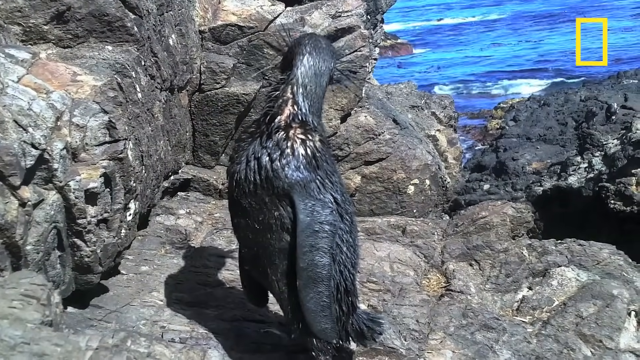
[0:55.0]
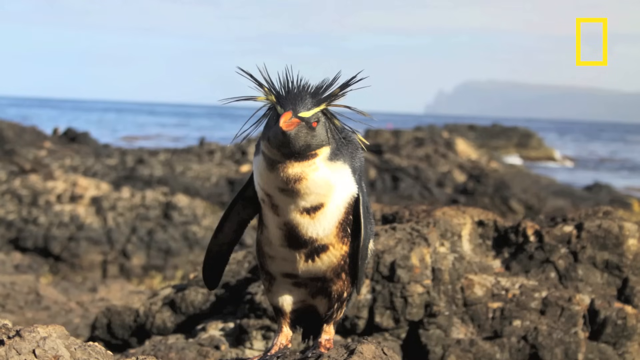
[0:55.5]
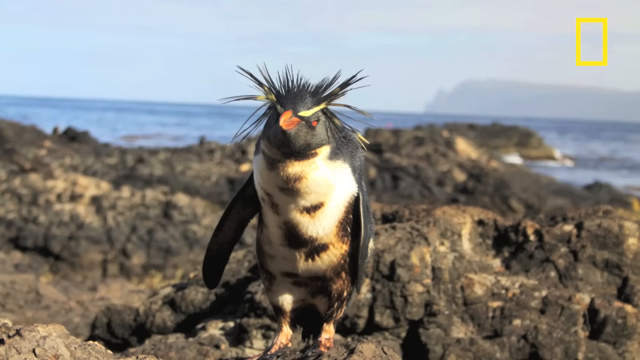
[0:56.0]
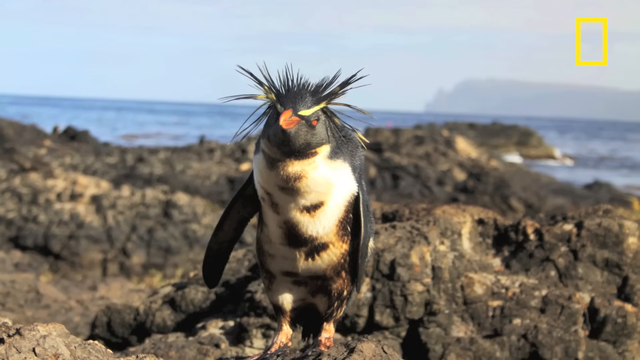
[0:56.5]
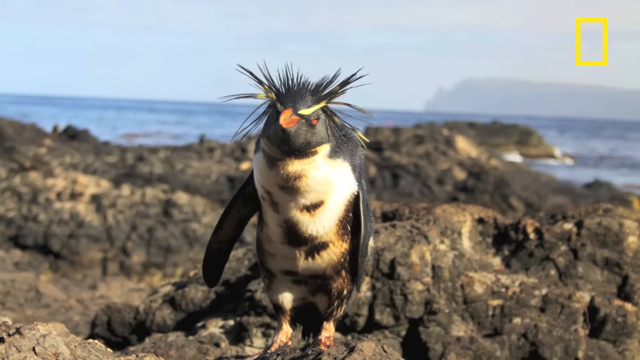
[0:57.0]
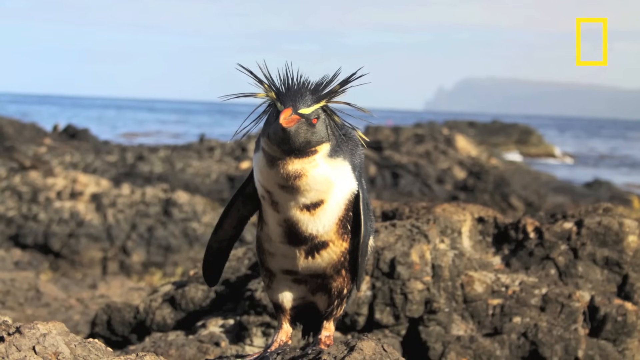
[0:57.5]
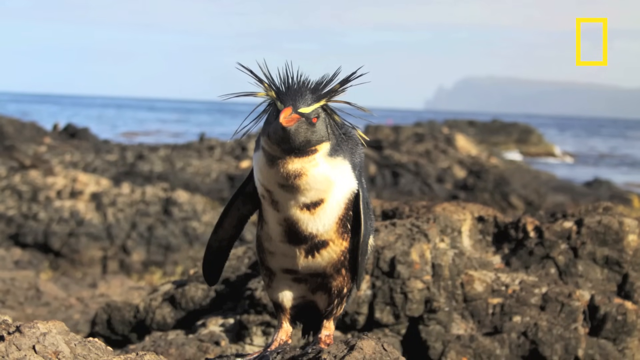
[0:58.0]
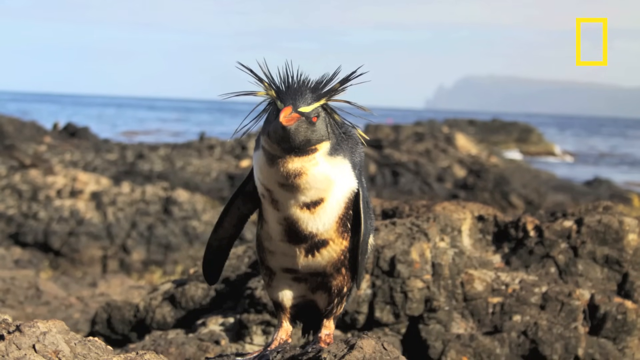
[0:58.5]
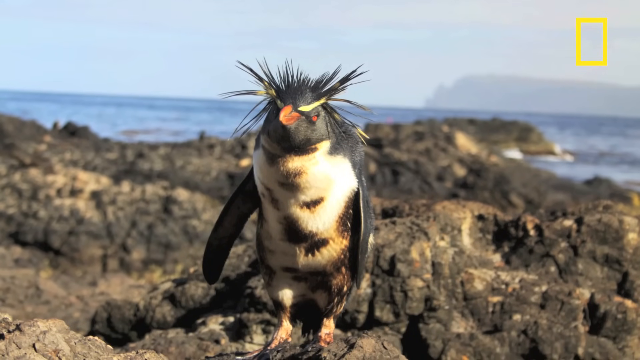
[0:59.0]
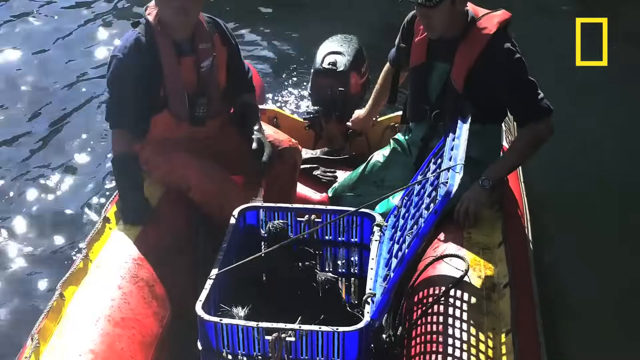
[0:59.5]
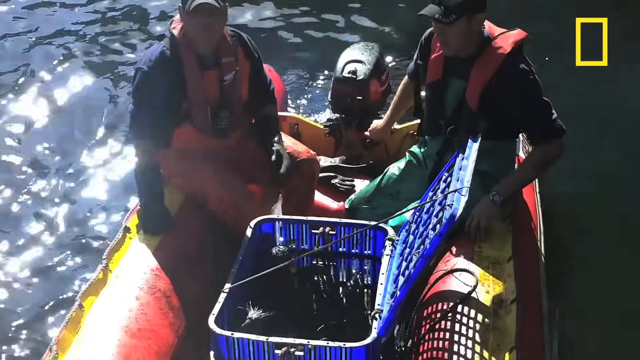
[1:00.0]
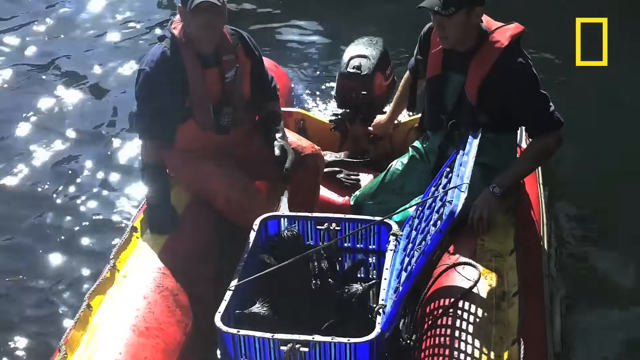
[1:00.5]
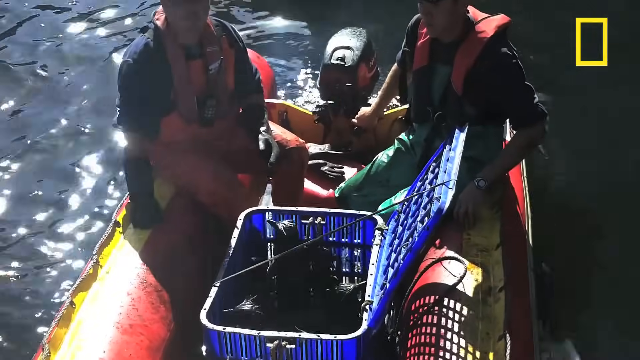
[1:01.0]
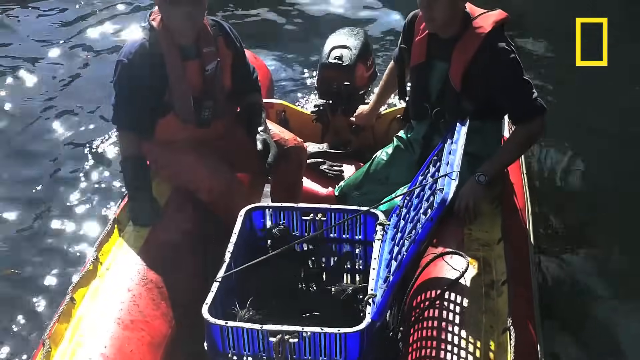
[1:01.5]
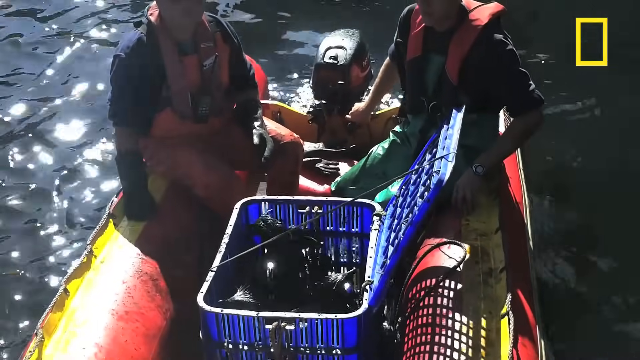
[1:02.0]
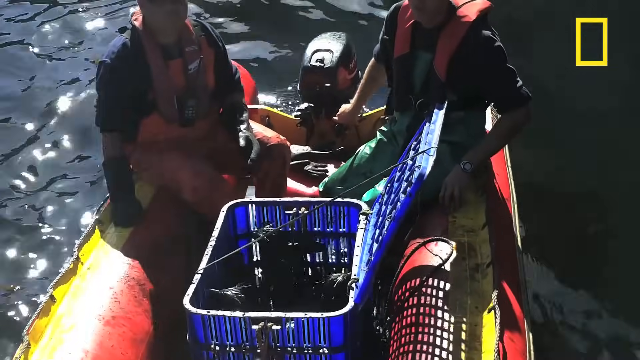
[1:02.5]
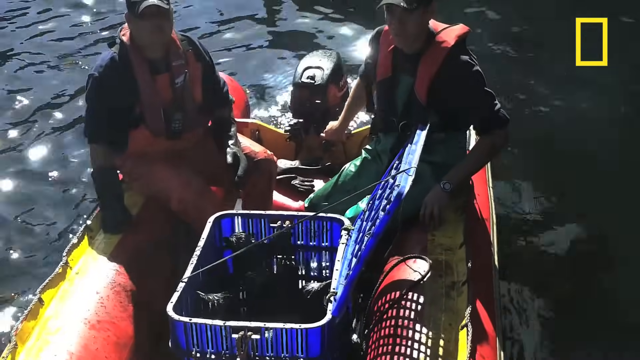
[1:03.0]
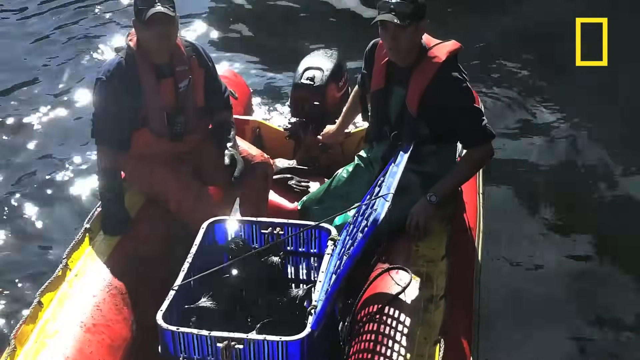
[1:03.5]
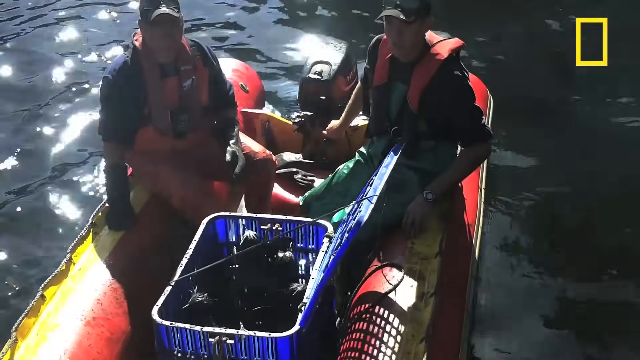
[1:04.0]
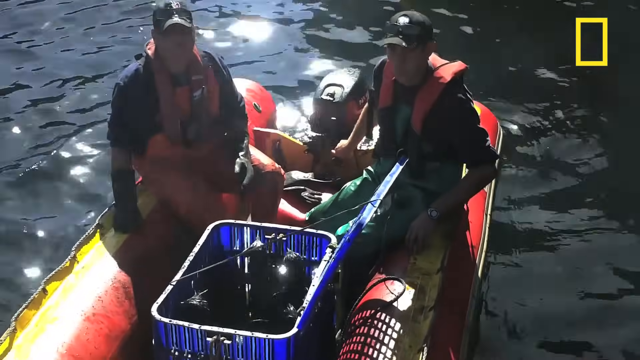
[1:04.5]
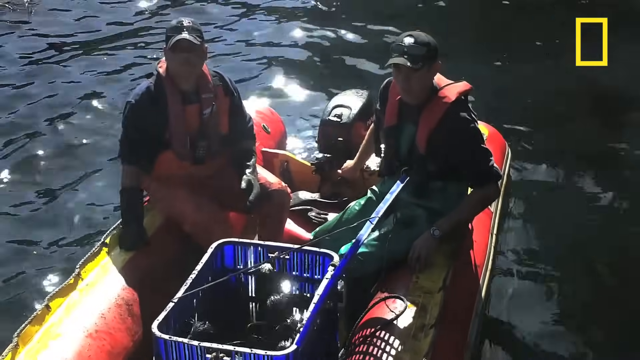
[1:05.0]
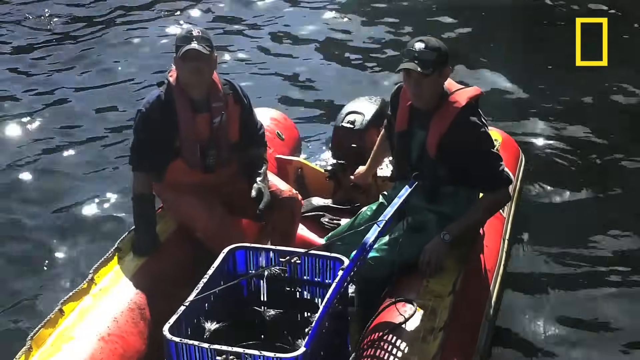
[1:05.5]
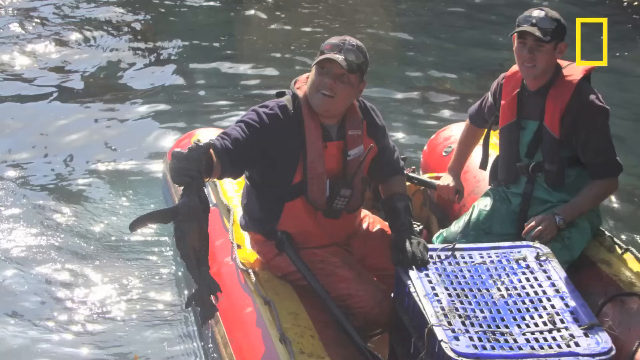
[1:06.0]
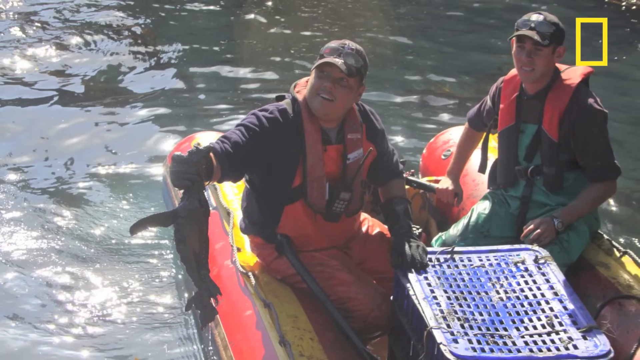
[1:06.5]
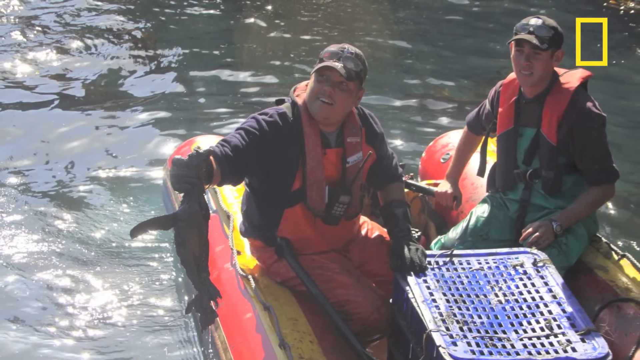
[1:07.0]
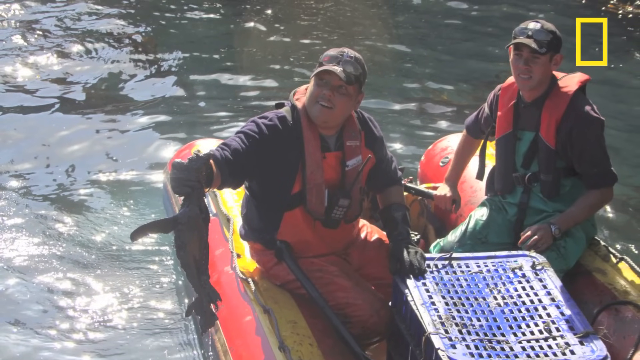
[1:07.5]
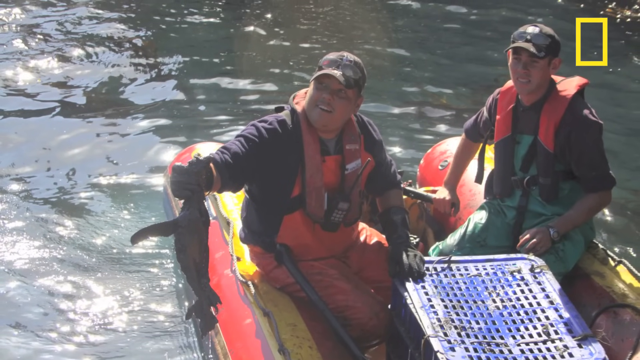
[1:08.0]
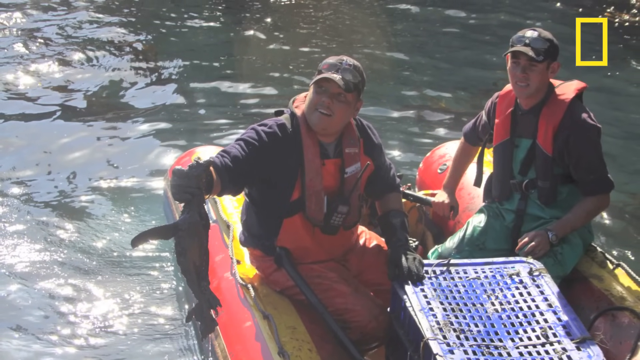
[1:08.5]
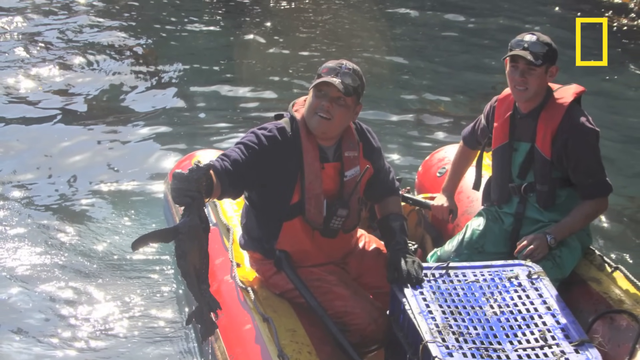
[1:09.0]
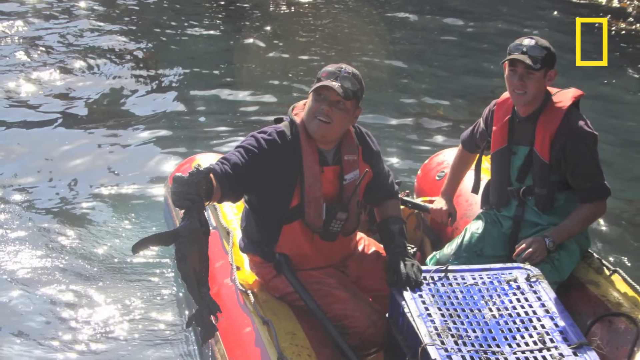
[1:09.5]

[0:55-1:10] The penguins are still there, and one has a white belly. Then the scene appears to be with some scientific researchers who have some penguins on a little inflatable-type boat, with the penguins in a plastic box, a little crate. It looks like they are trying to take them either to land or to some kind of safety. Although it is sunny, it looks like it is not that warm there, and the men look kind of bundled up.